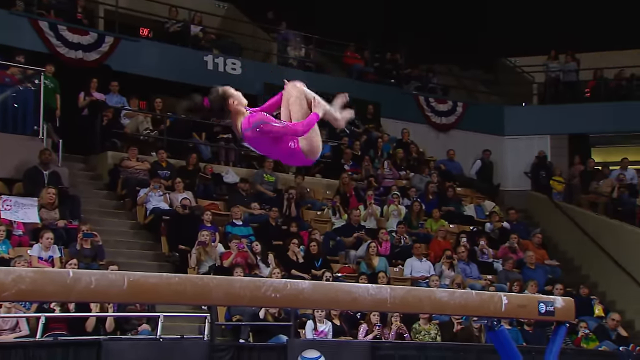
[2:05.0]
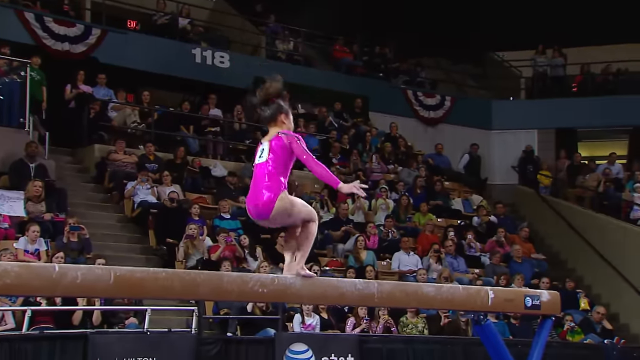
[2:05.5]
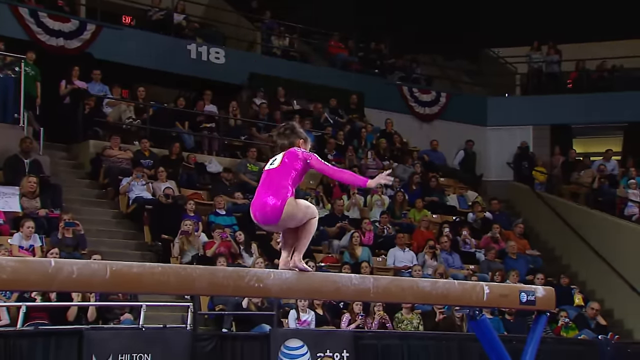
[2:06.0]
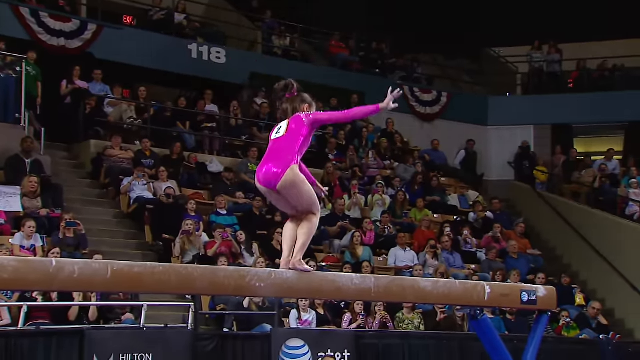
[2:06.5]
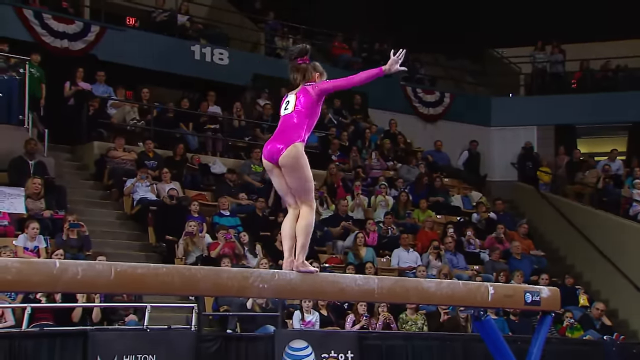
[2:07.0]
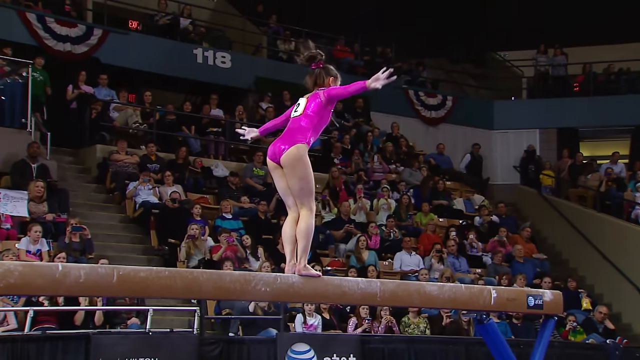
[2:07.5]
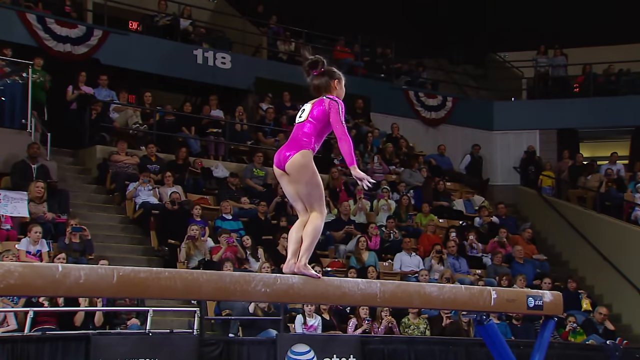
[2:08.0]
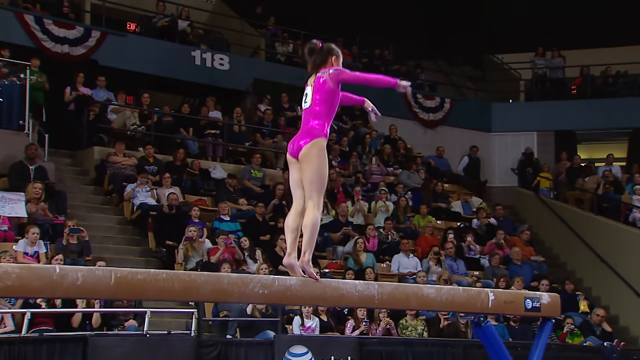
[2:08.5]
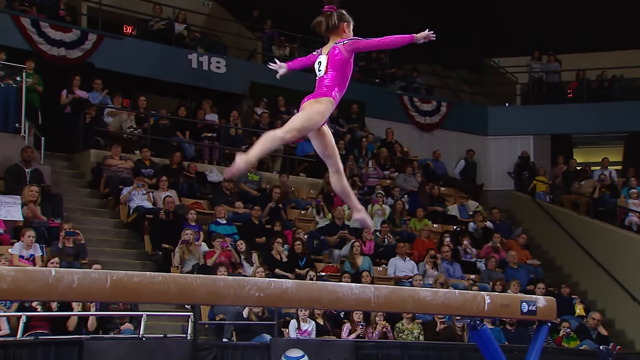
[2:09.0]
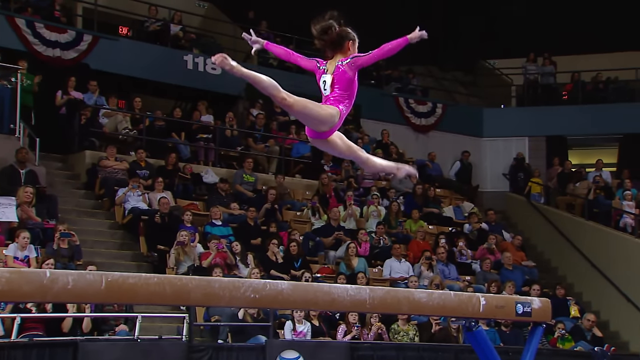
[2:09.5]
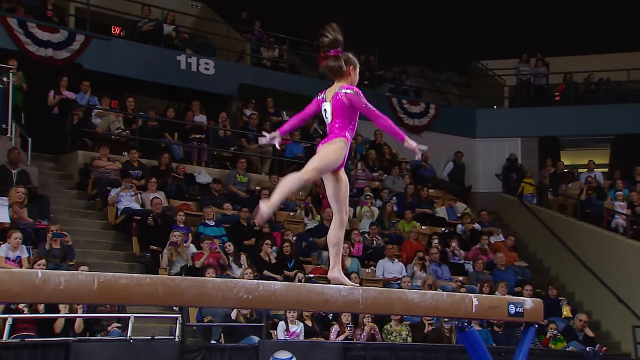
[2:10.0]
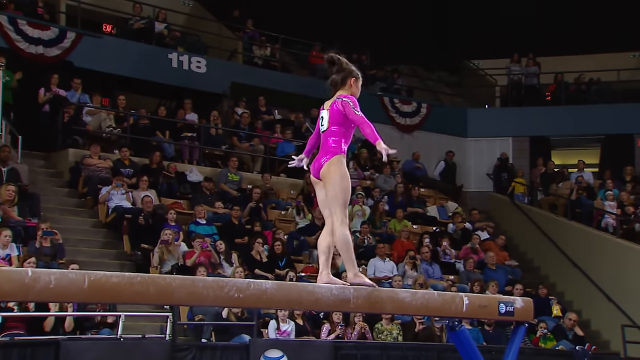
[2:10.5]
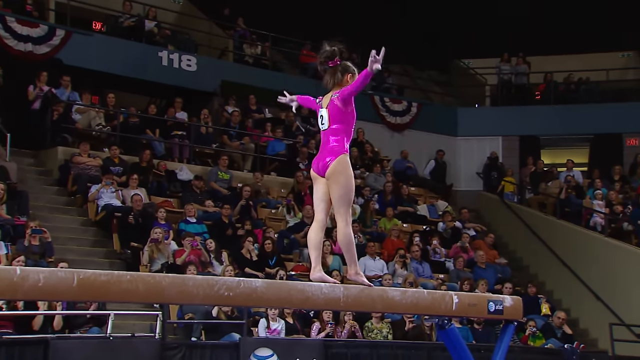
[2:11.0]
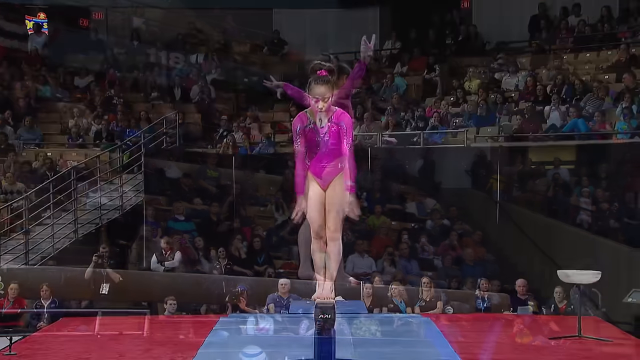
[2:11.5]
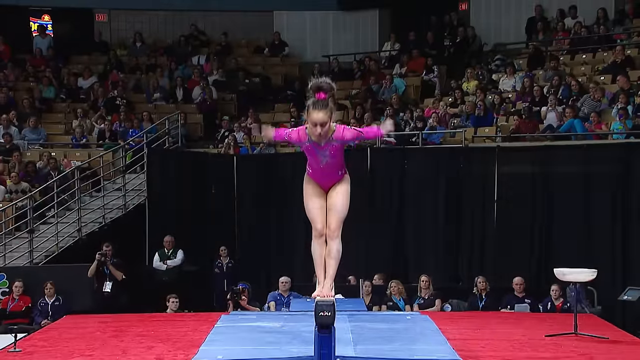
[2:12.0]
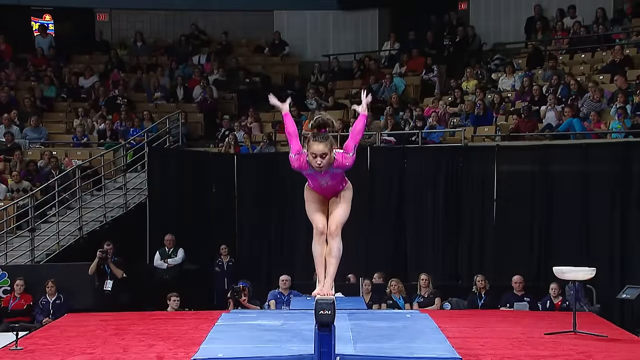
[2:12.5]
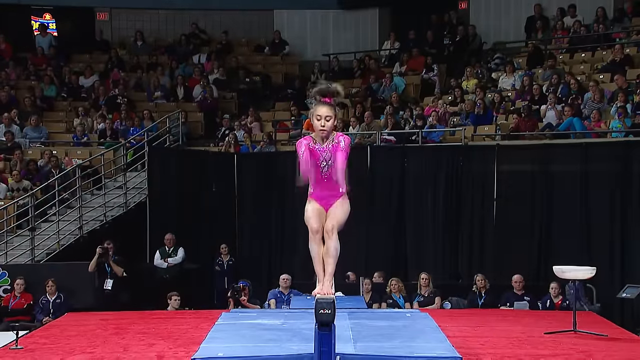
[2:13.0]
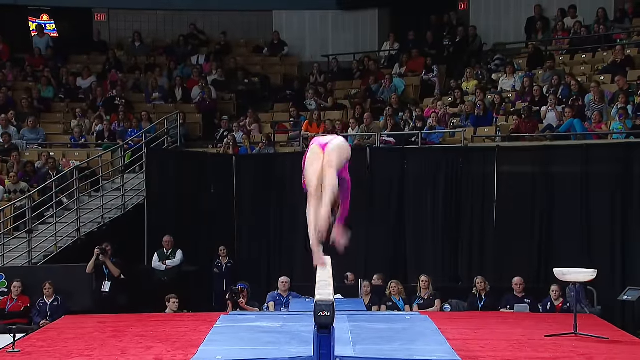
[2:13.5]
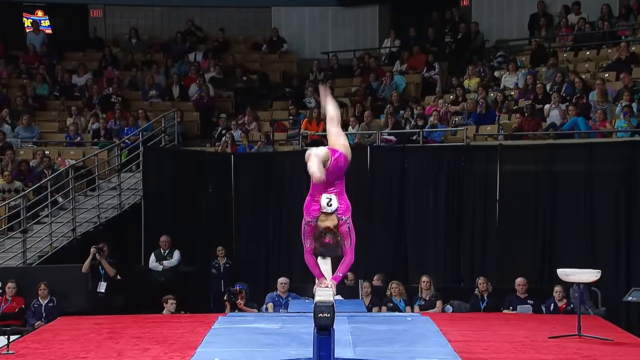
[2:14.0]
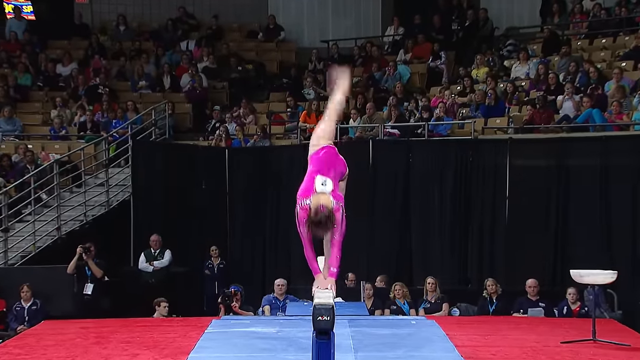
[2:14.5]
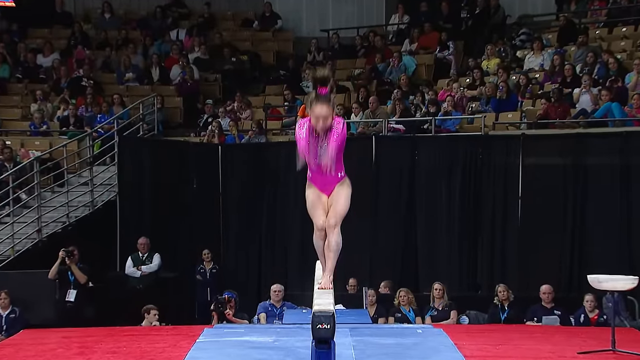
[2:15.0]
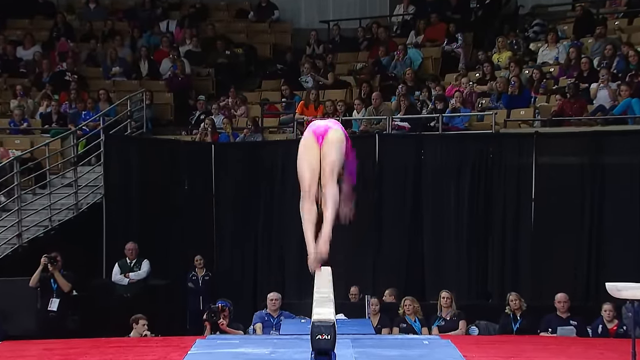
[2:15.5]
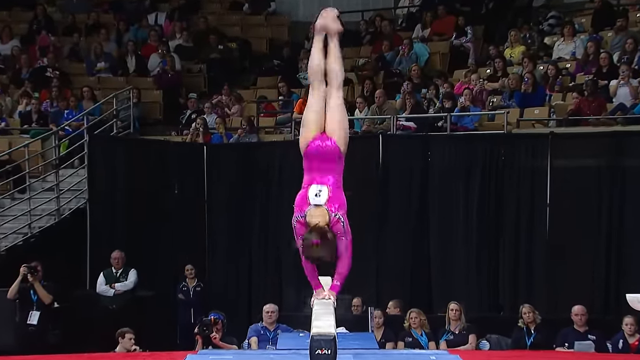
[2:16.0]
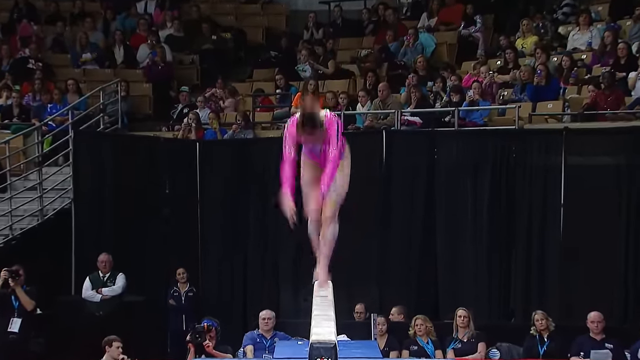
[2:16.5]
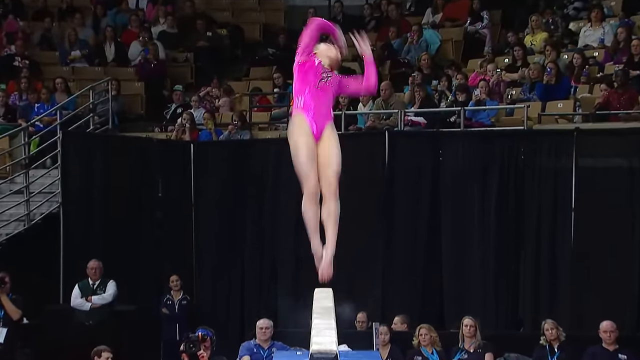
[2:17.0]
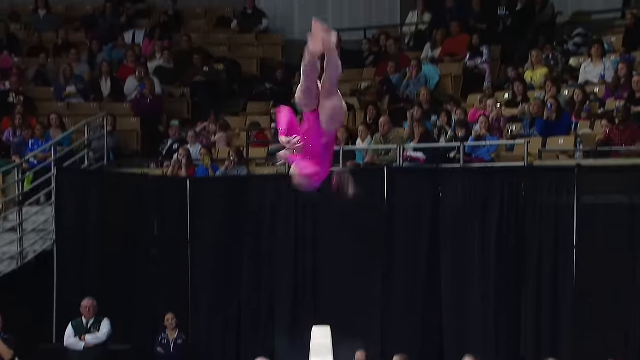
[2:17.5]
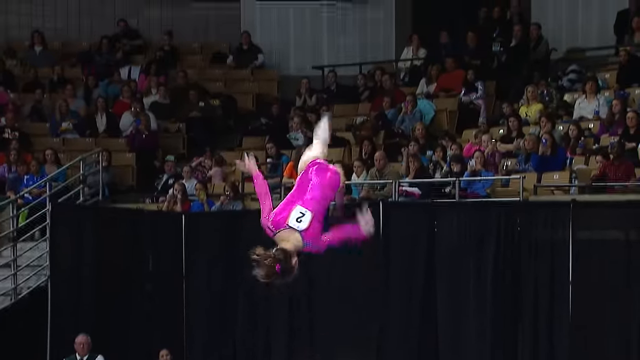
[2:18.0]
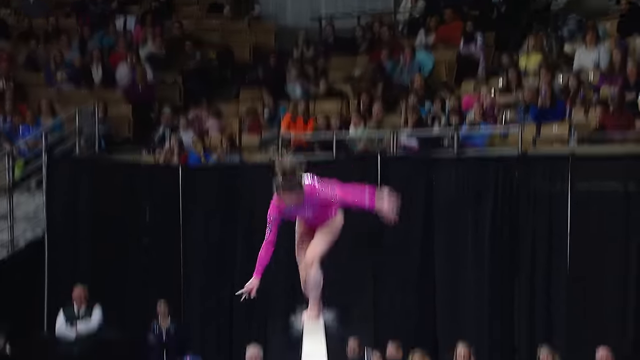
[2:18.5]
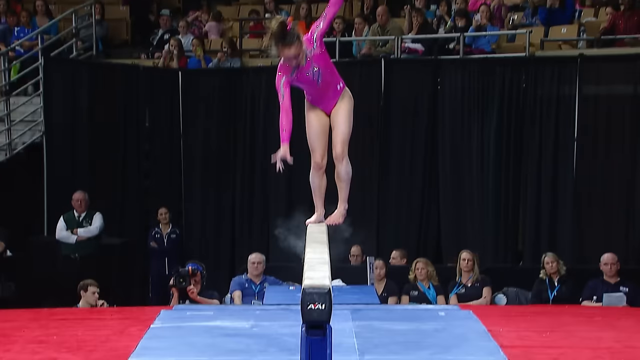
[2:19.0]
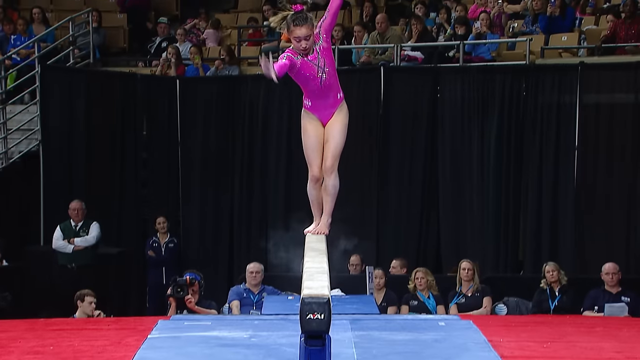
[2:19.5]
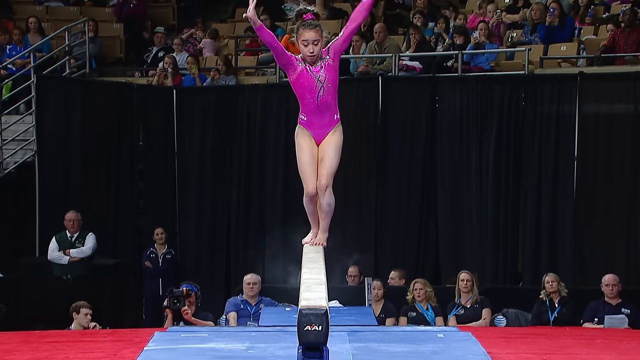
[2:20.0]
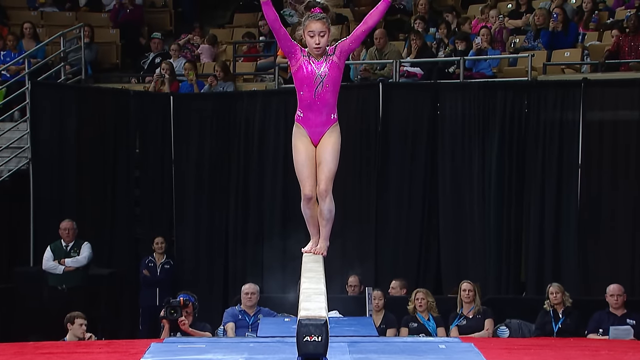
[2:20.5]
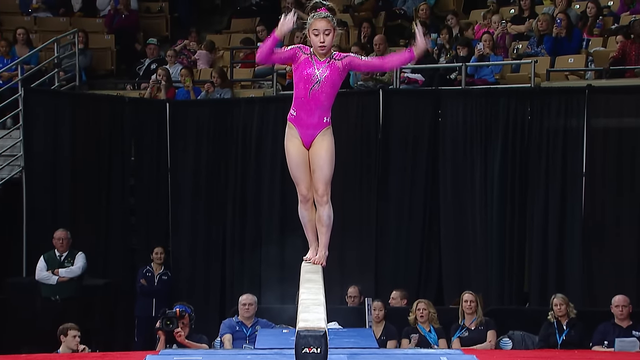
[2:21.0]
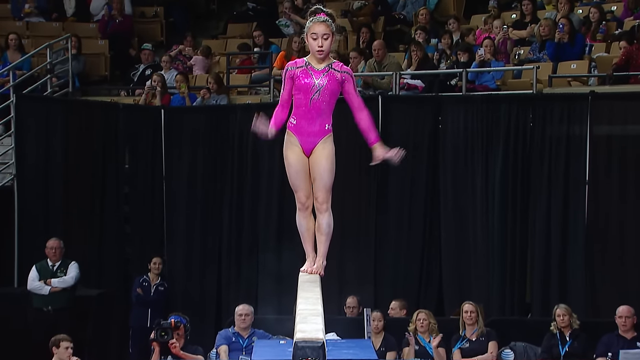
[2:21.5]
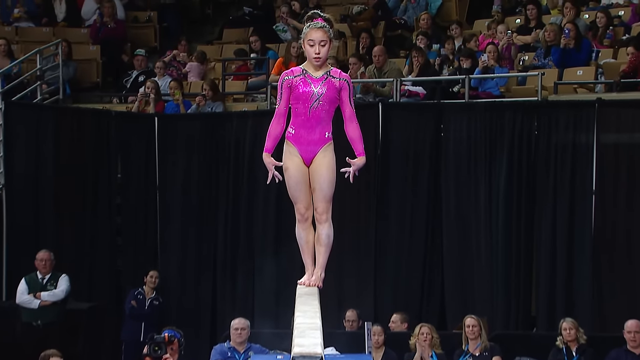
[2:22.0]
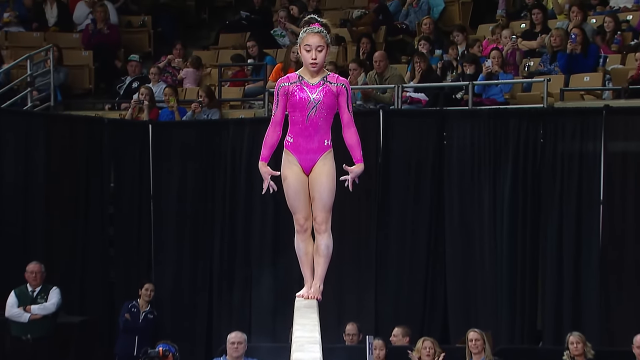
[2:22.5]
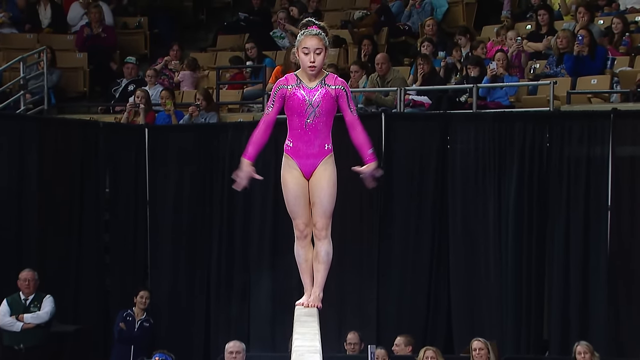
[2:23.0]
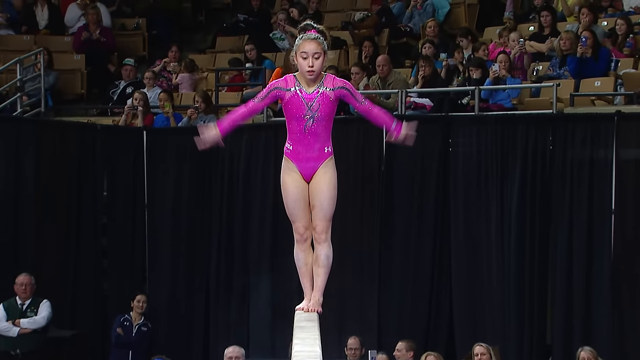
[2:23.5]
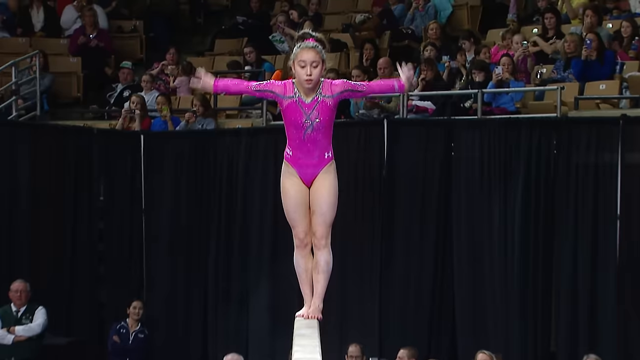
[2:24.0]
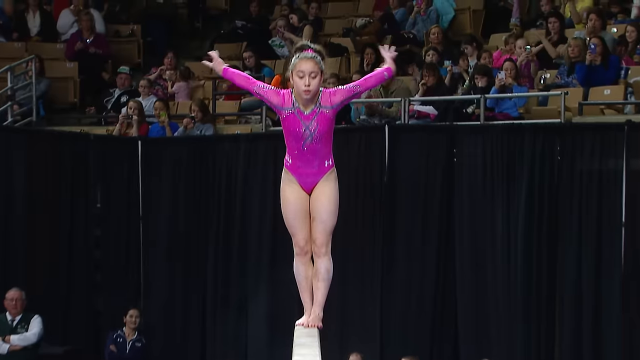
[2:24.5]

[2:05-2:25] The gymnast plants her legs and jumps in the air. She is wearing the light purple suit. With her hands planted on the beam, she flips backwards several times, turning and turning until she finally lands, wobbles a little, and almost loses her balance. She then jumps onto the beam and kicks in the air. Several people are sitting in chairs in the background. A man to the left has his arms crossed and wears a vest and a tie. The number 118 is visible up in the audience. There are walls, black curtains, stairs going up, and a silver railing, along with the audience, brown chairs, and some kind of flag strapped over the top. The beam bounces, and it also carries the AT&T sponsorship. There are railings and people in multiple colors all over.